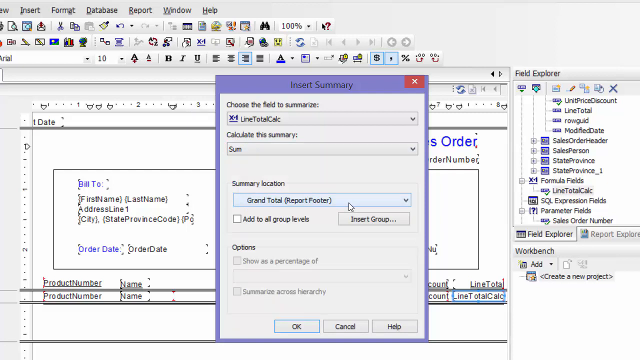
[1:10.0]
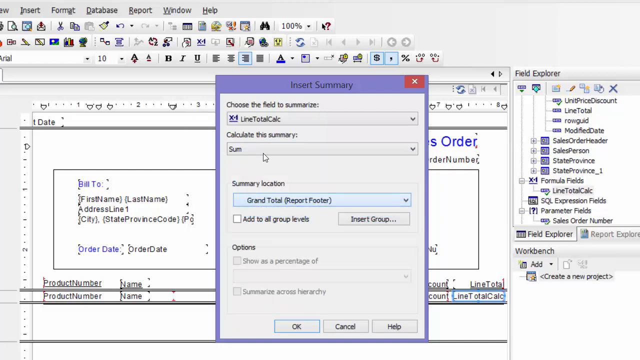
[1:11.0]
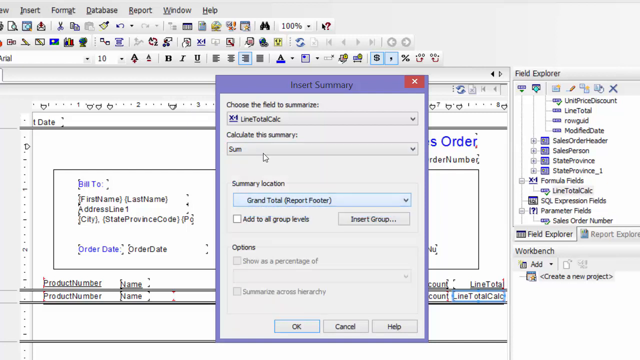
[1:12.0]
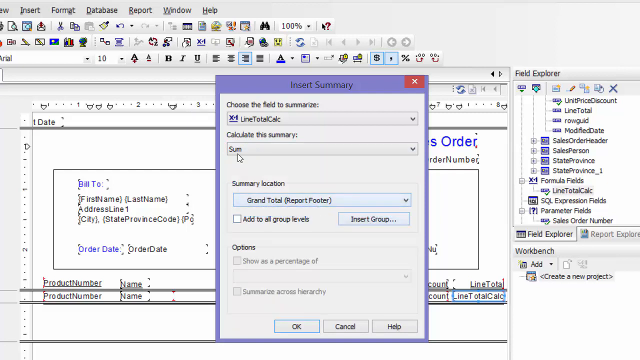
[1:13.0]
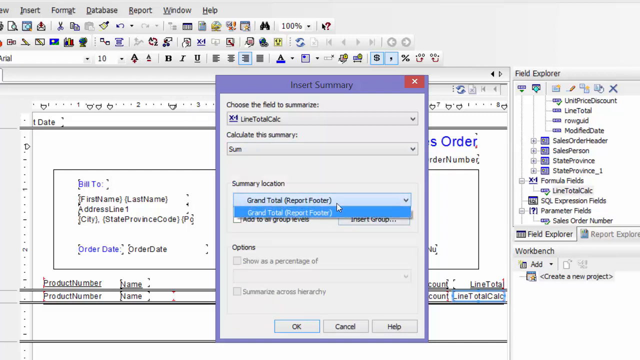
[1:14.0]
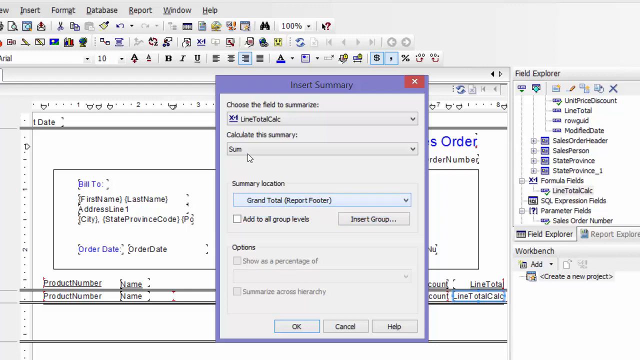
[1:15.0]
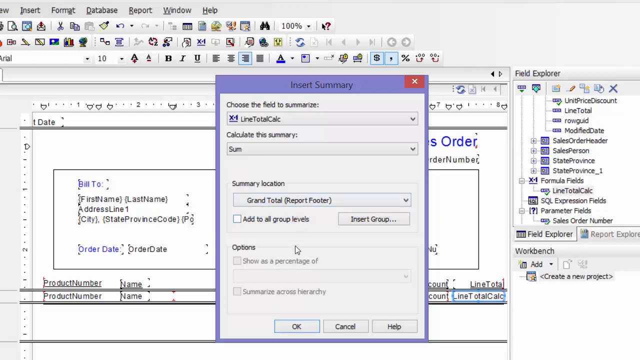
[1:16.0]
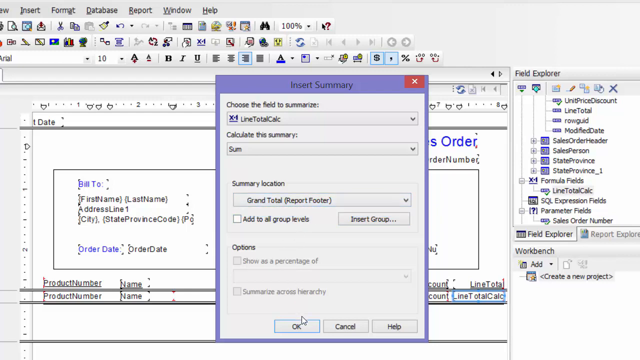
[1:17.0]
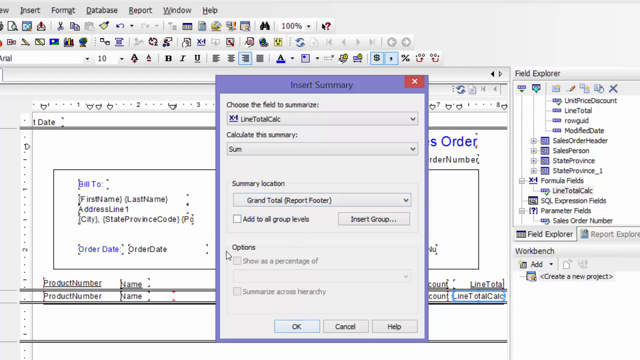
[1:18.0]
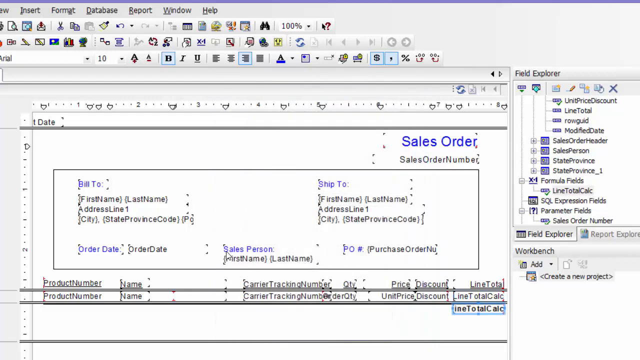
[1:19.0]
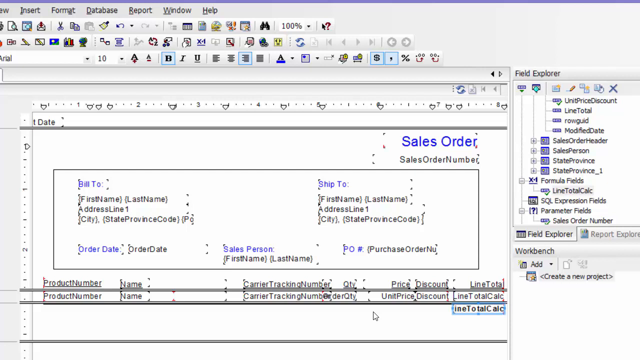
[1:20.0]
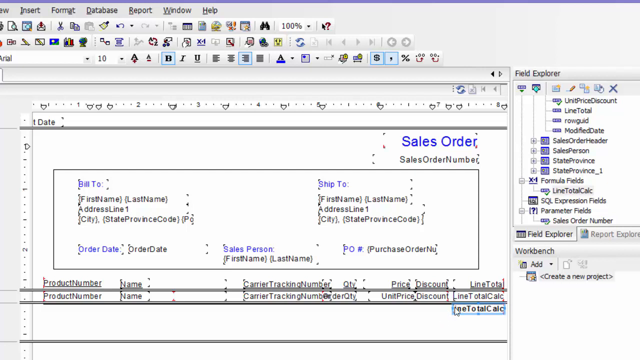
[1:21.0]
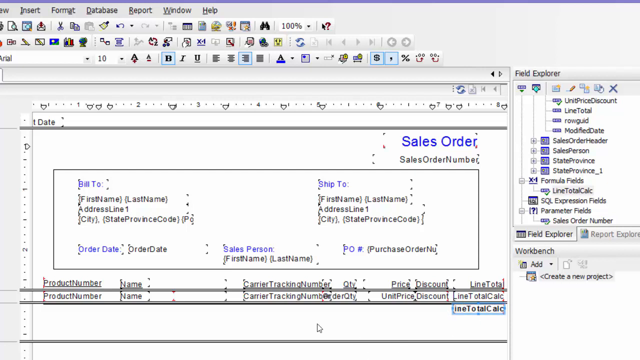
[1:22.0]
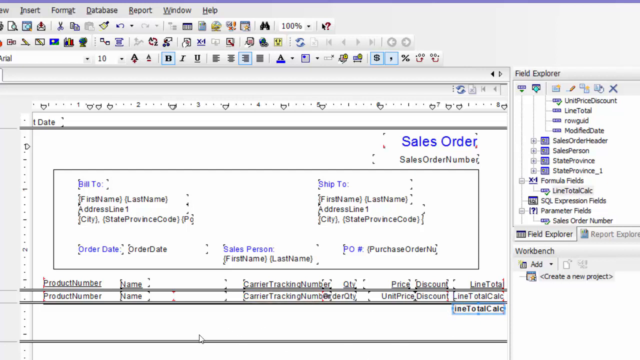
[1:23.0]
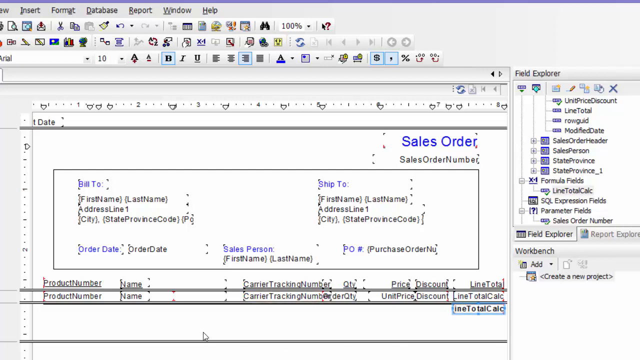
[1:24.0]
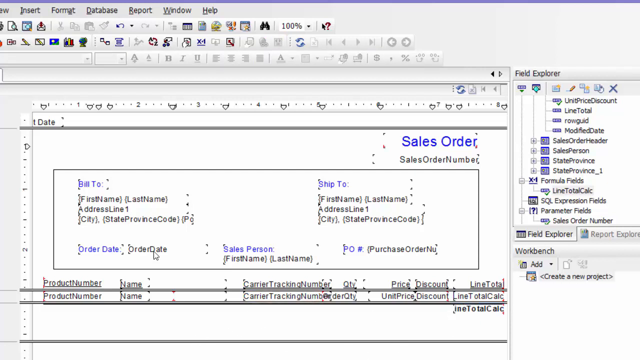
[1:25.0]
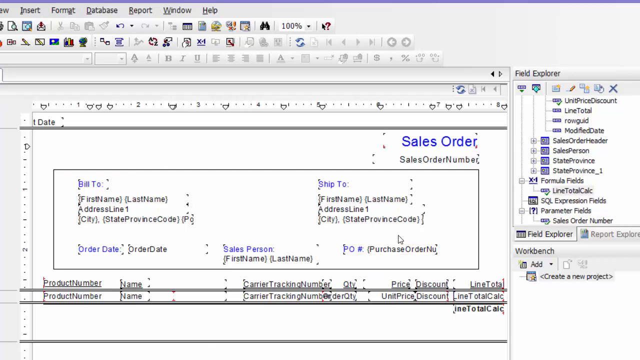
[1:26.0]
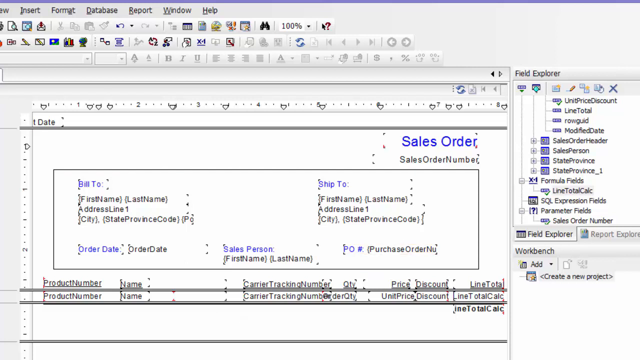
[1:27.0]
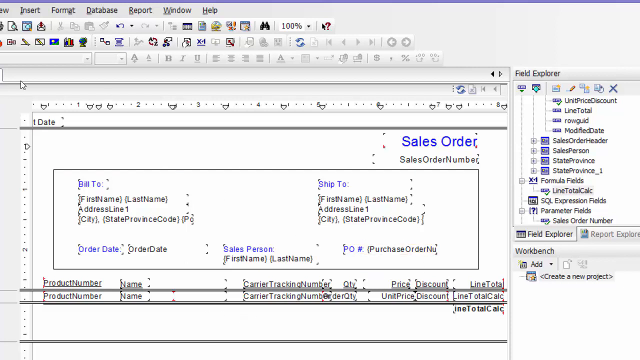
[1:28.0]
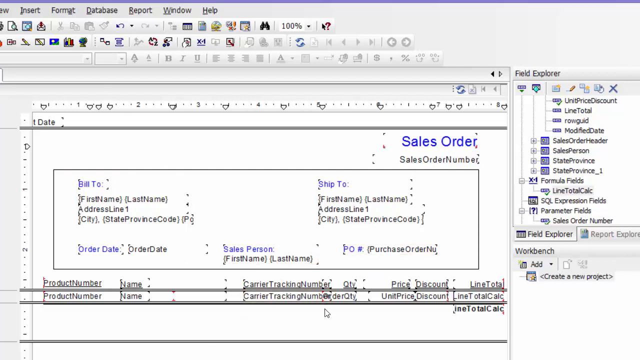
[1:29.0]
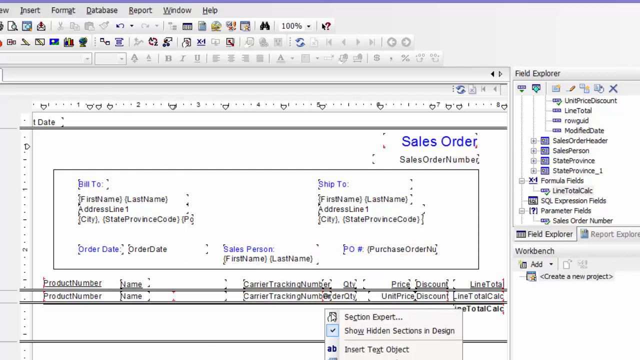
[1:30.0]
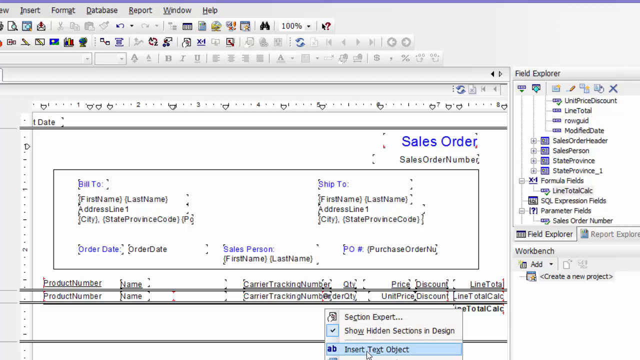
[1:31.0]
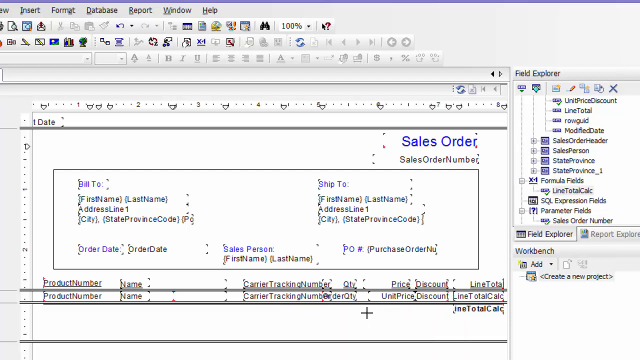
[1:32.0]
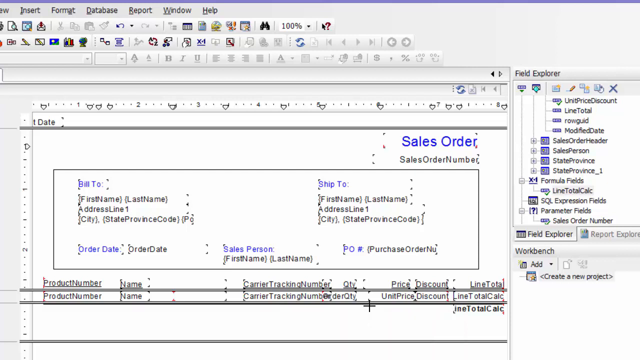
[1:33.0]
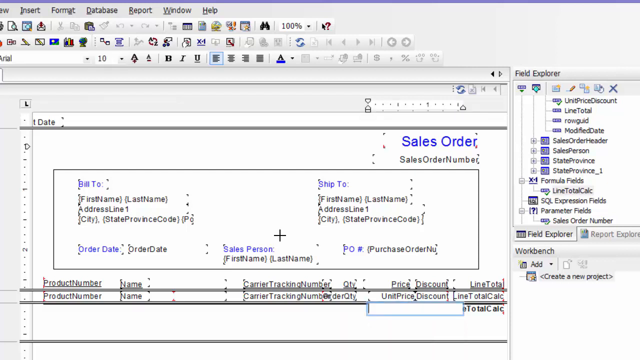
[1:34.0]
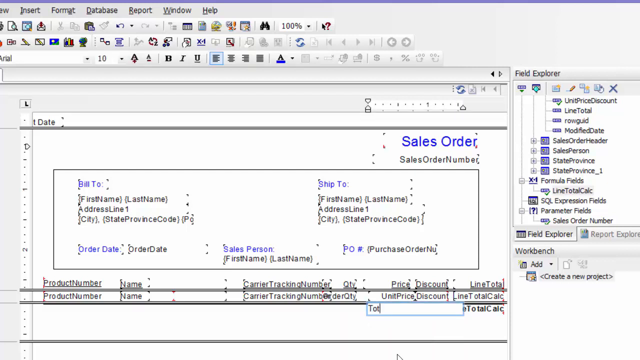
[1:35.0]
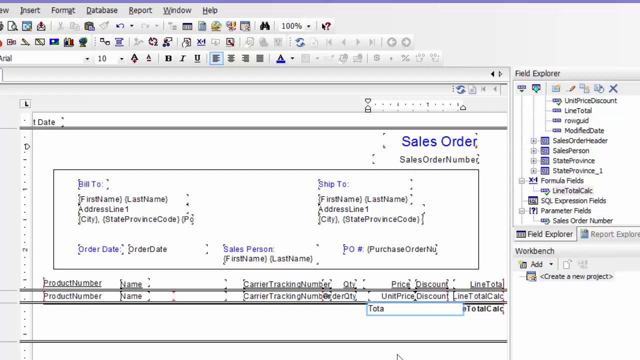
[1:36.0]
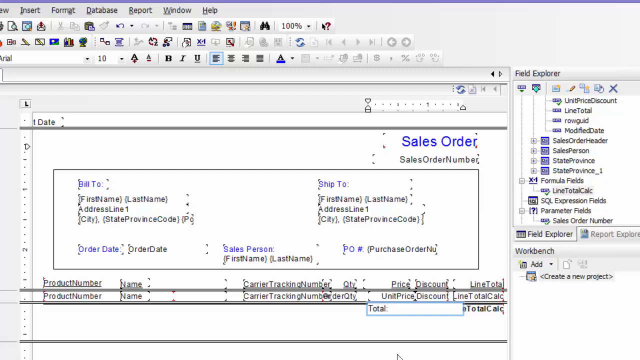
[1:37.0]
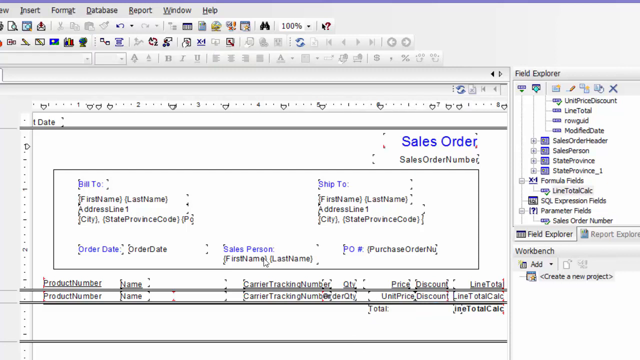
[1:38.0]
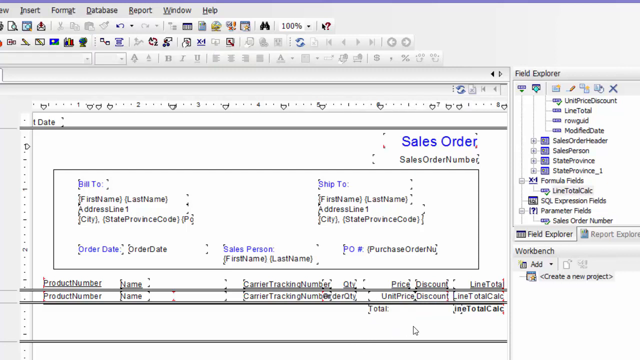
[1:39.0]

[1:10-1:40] The user looks at the insert summary again, and a vertical box pops up. Rather than the SUM drop-down, they click the summary location, which has a faint border around it. Clicking the grand total shows two options, both reading report footer. They click off of it, apparently because that is the only option. A couple of options are grayed out: "show as a percentage of" with a gray, unchecked checkbox, and a drop-down box that is blank and grayed out. There is also "summarize across hierarchy". They click OK, and nothing appears to change. There is a blue border around line total calc, with the L missing in "line". The user seems to be going through different parts, perhaps to double-check areas such as bill to and ship to. They right-click something for a second and a crosshair appears. A small text box then appears right underneath the discount in the fourth column. They type "Total:", capitalized with a colon, with a cursor blinking, and then click off of it.